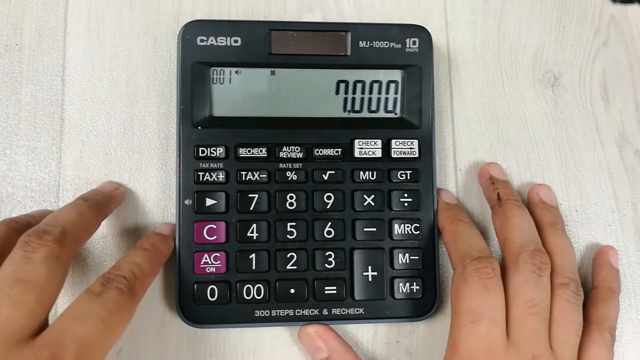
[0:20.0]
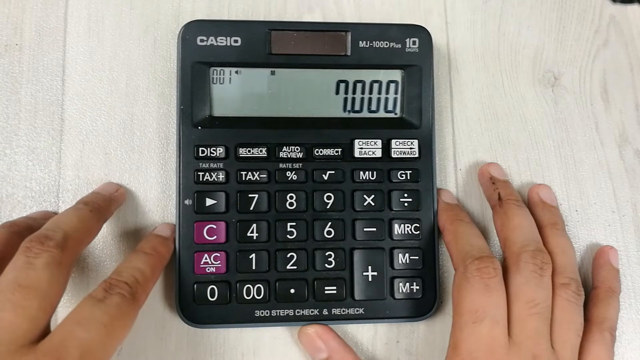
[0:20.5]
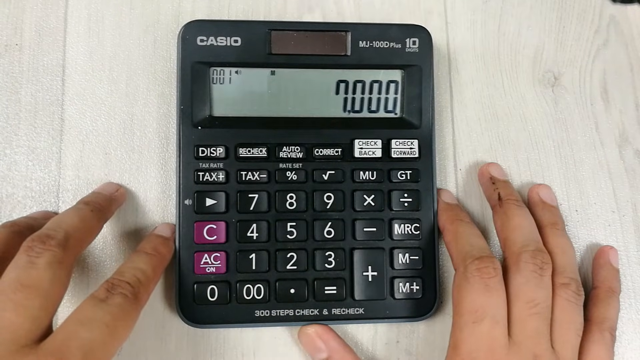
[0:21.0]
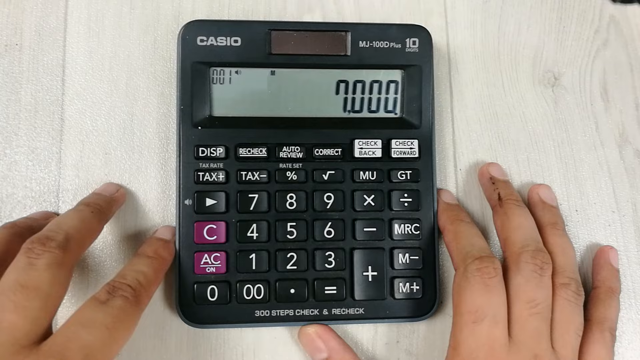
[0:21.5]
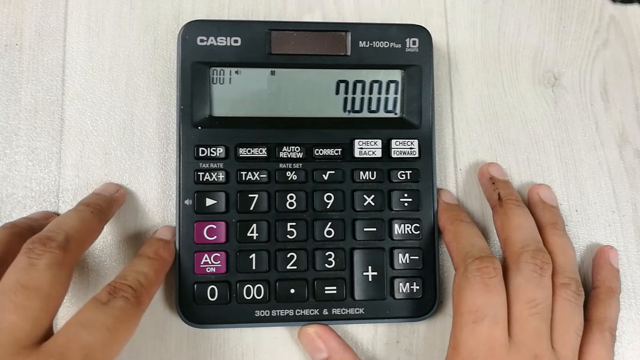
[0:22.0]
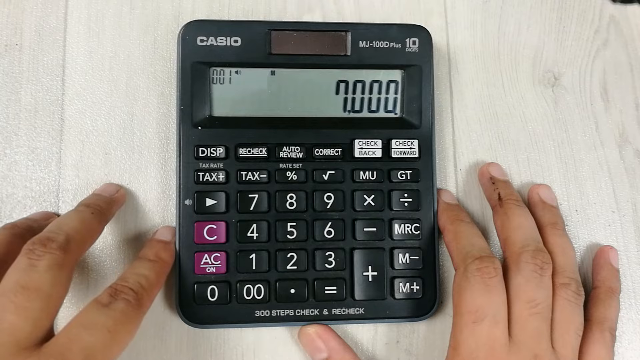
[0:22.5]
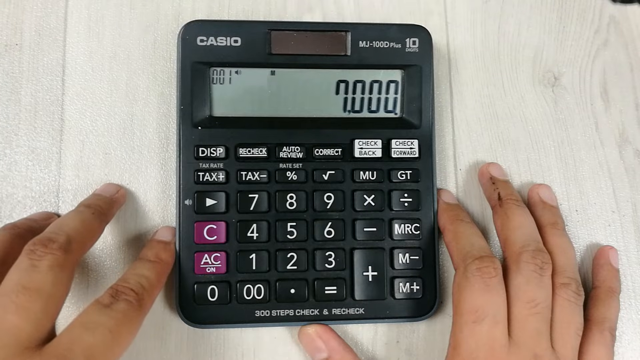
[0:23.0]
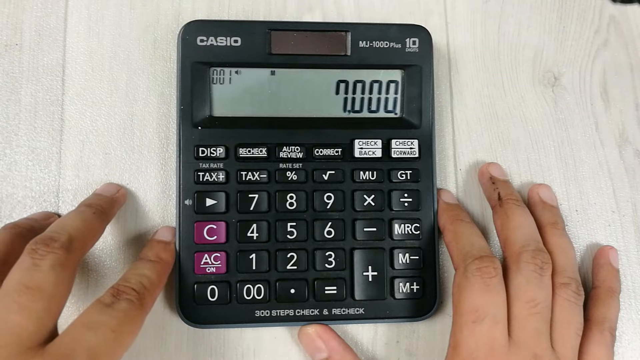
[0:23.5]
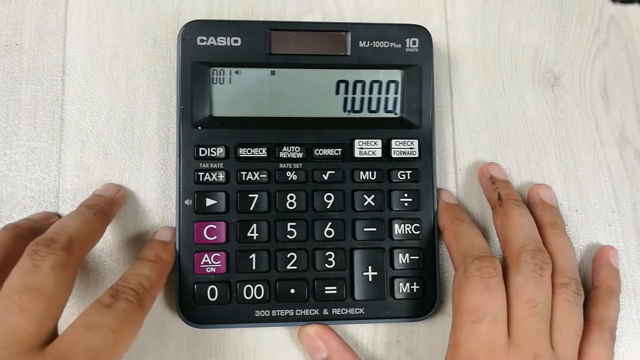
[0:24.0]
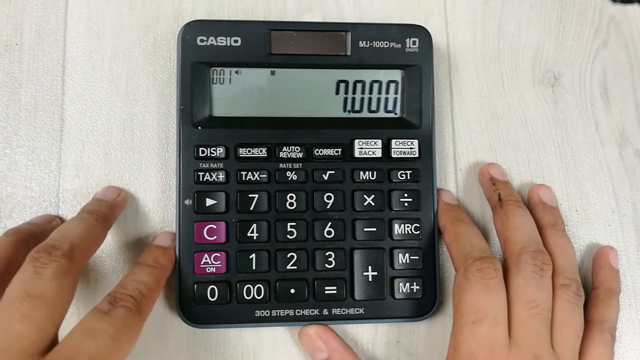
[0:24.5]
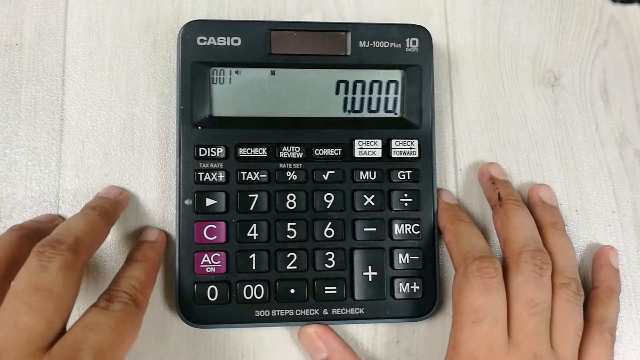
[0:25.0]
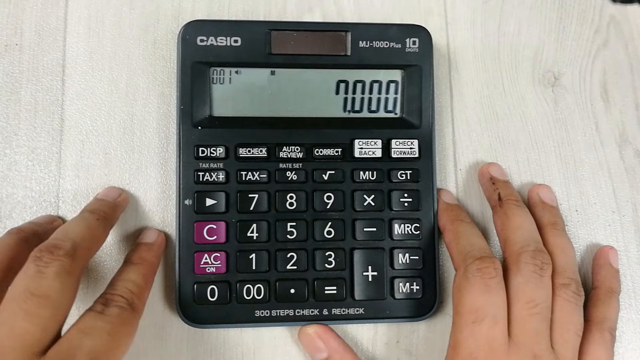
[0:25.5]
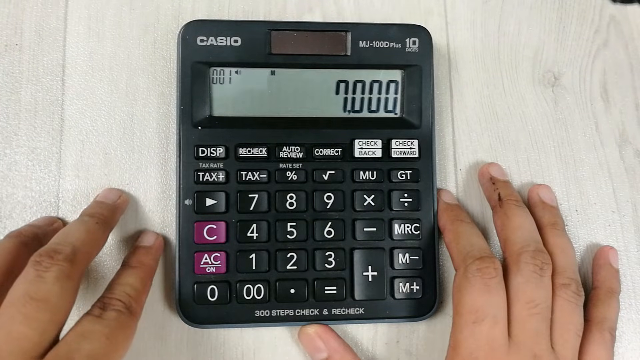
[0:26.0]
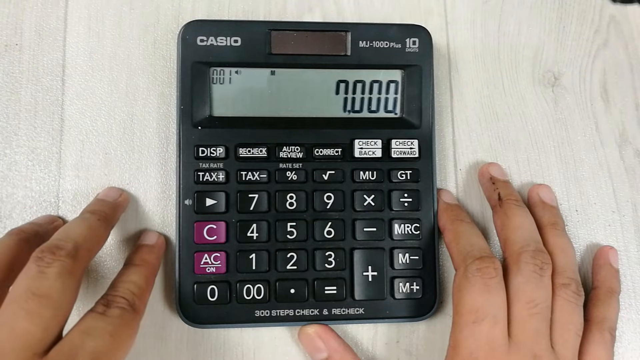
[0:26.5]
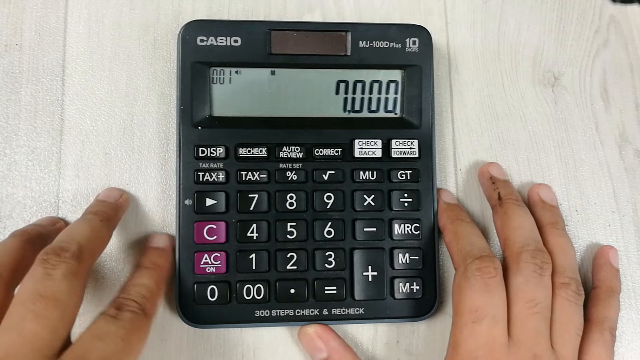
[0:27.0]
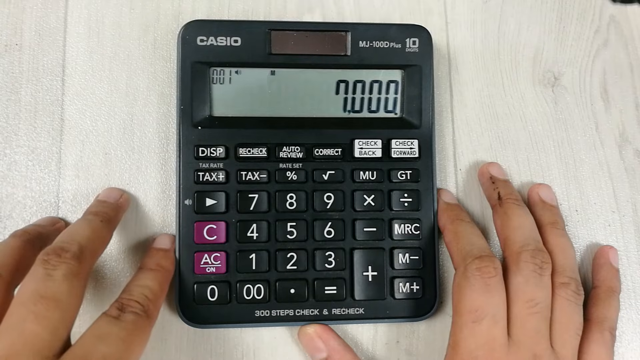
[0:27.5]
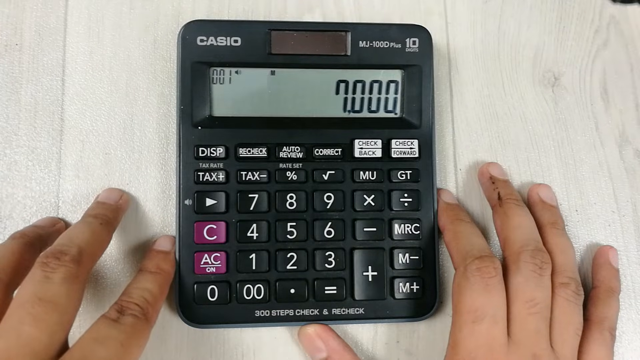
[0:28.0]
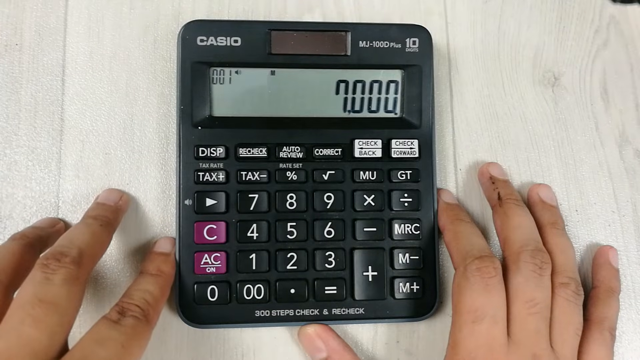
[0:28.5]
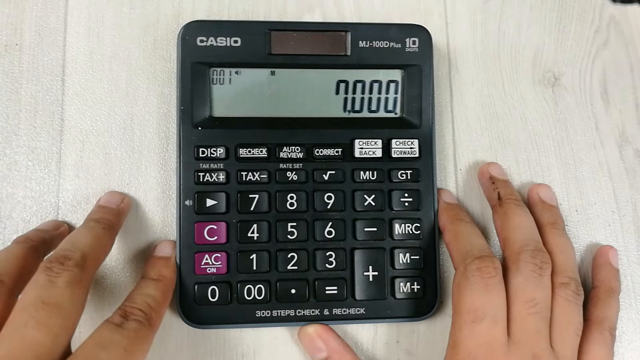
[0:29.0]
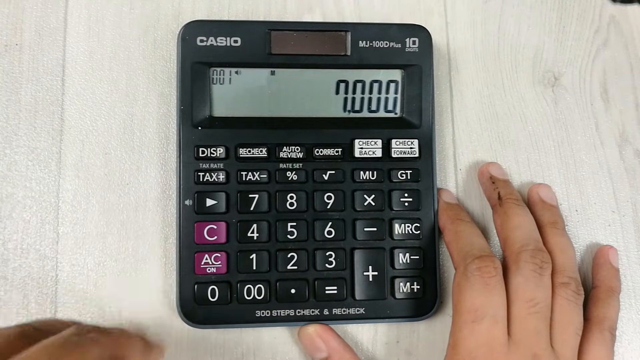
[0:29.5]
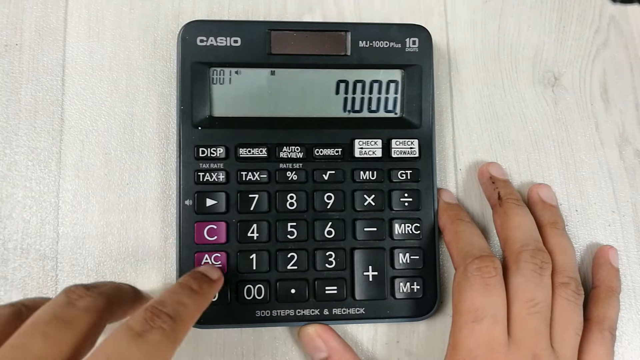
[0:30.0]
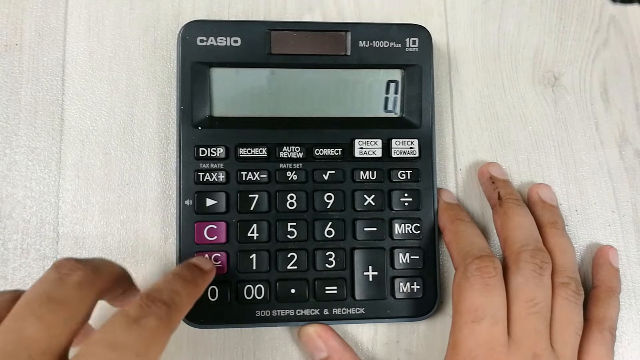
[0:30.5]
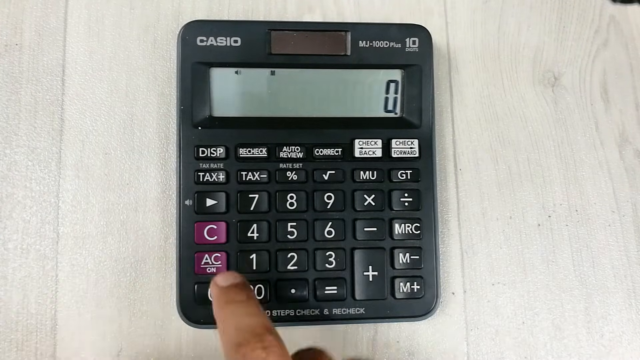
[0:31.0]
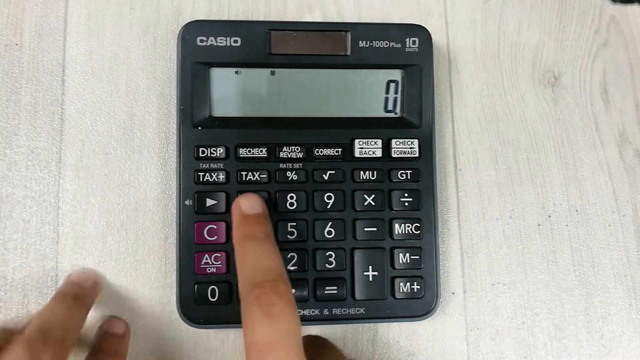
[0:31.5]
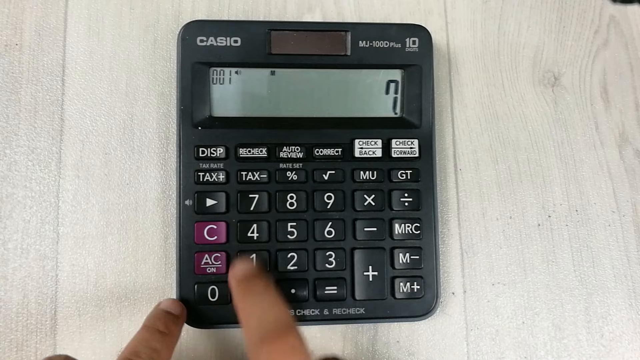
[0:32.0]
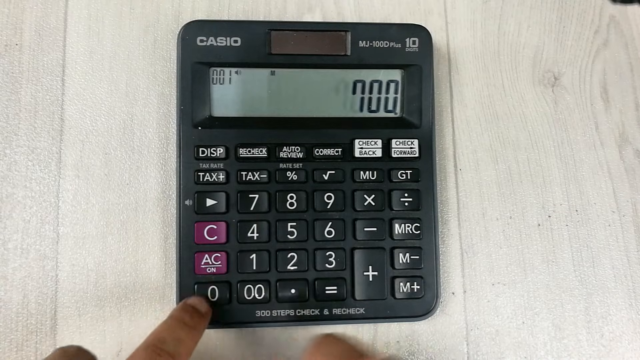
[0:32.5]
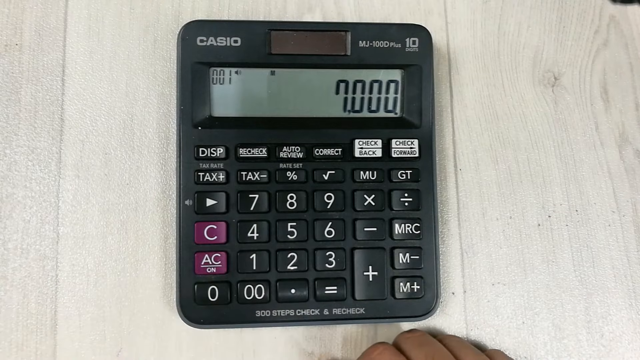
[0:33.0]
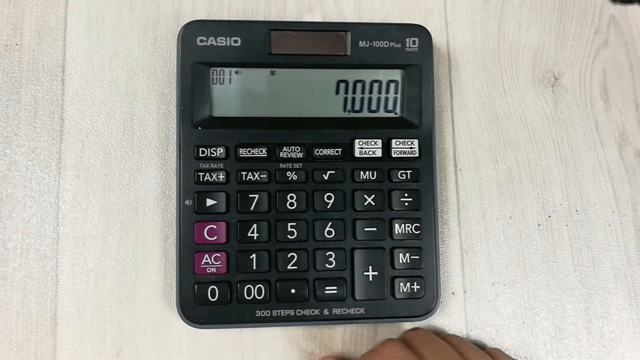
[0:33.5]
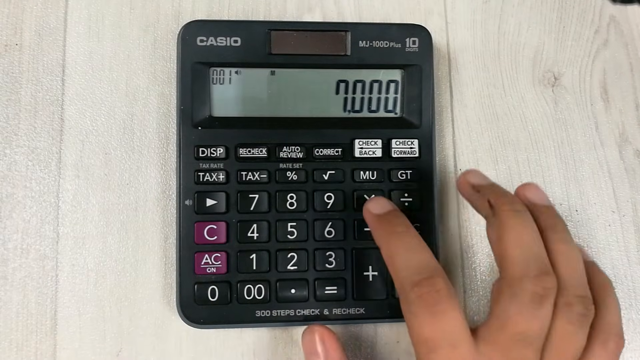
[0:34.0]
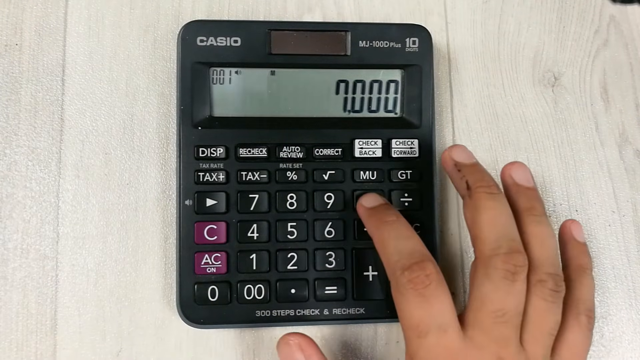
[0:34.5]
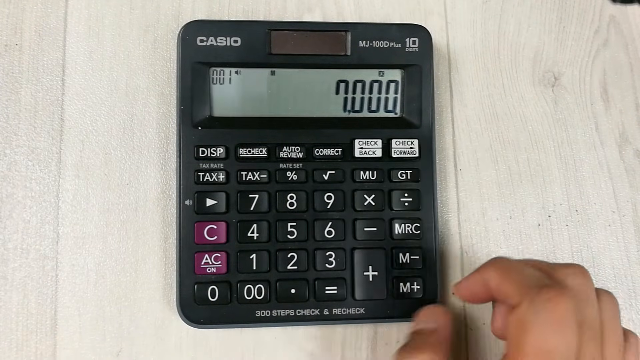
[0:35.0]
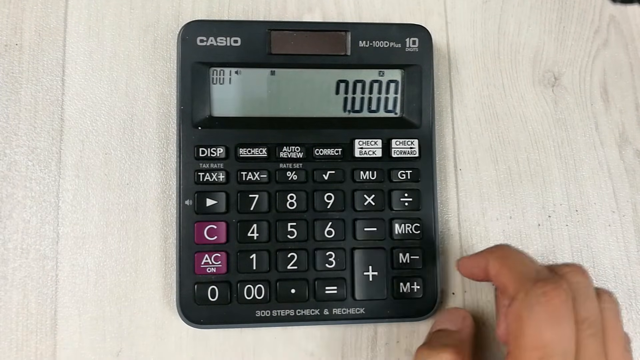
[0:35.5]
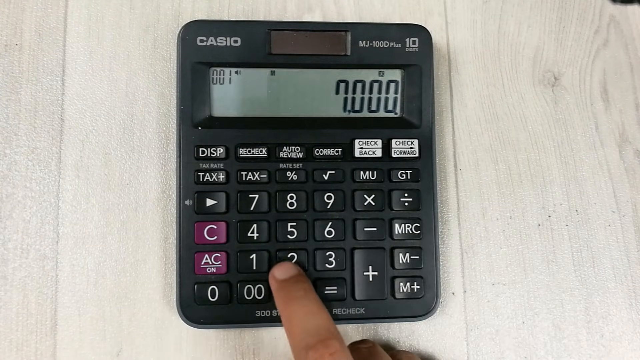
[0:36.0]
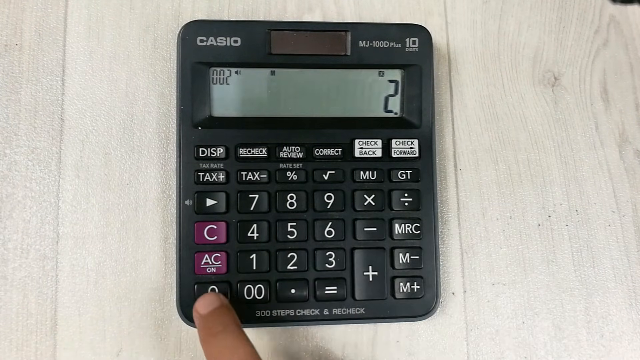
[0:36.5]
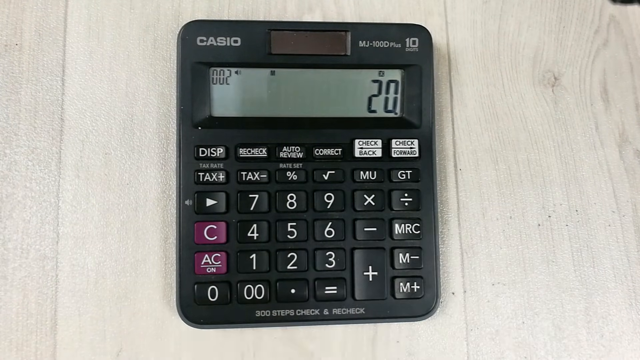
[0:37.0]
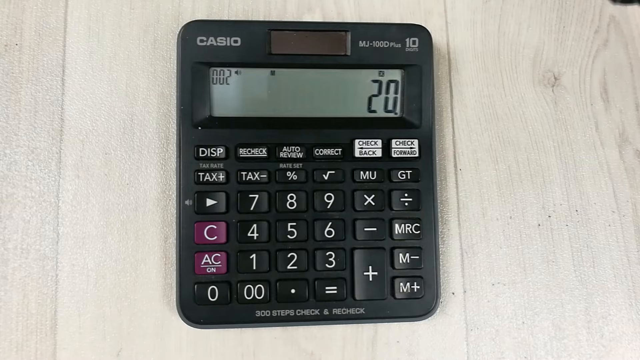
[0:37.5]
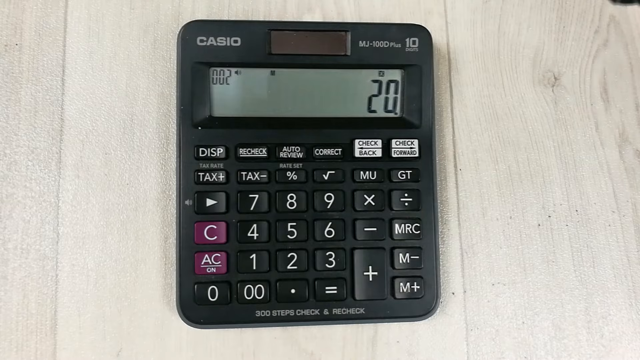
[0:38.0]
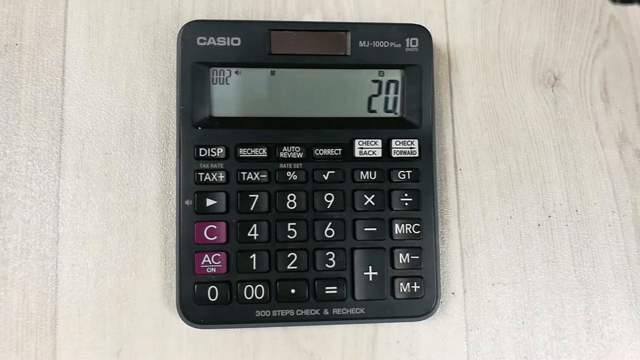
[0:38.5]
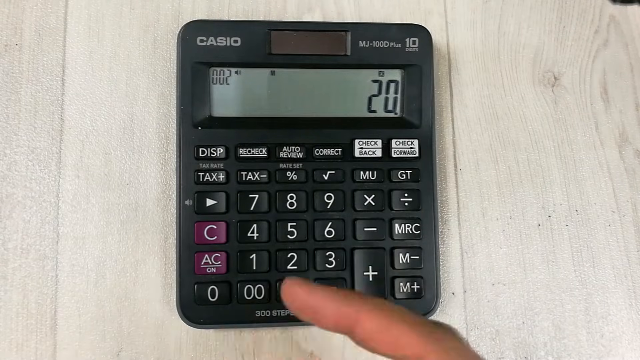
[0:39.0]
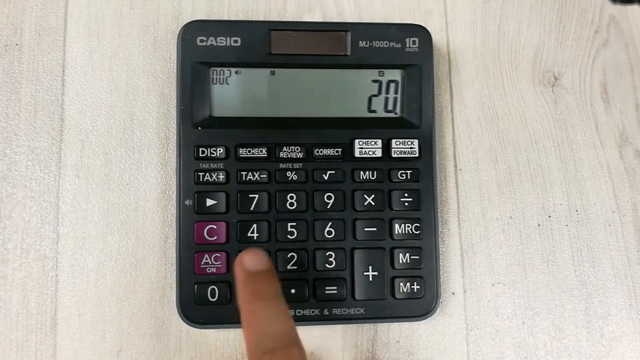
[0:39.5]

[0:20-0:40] The black Casio calculator shows 7000 on its display. The camera person has their left hand to the left of the calculator and their right hand to the right of it. The calculator is a Casio MJ-100D Plus. The person first rests their hands at the sides of the calculator, then uses their left hand to press the clear button, clearing the 7000, and a zero is displayed. With their right hand they press 7, then the double zero button, then the single zero button, bringing 7000 back on the screen. They press the multiplication button, enter two and zero, and then go to press the number 8.